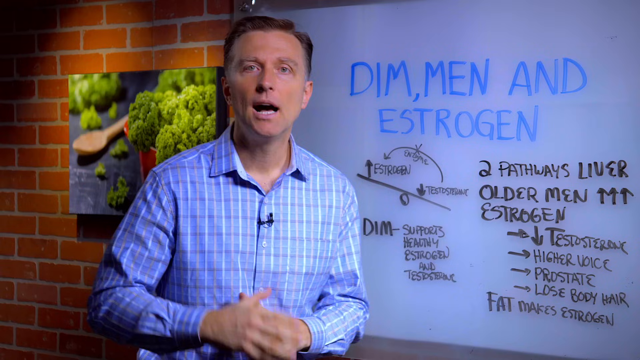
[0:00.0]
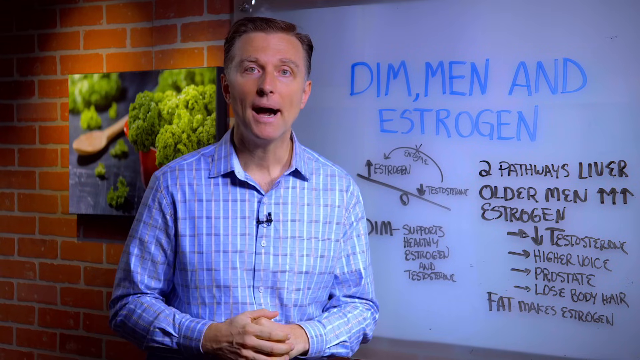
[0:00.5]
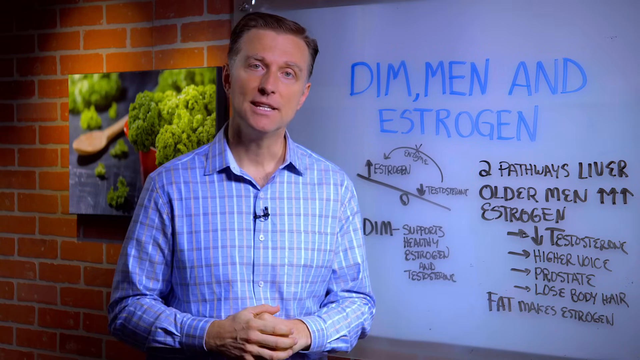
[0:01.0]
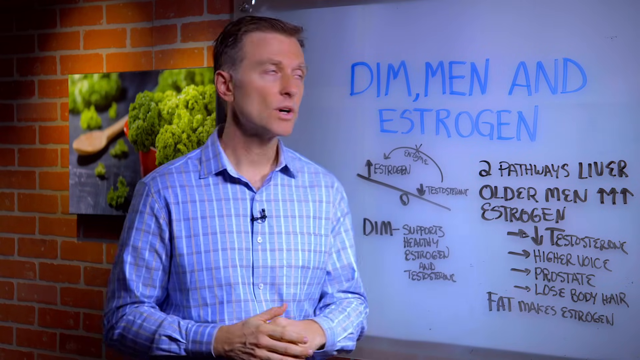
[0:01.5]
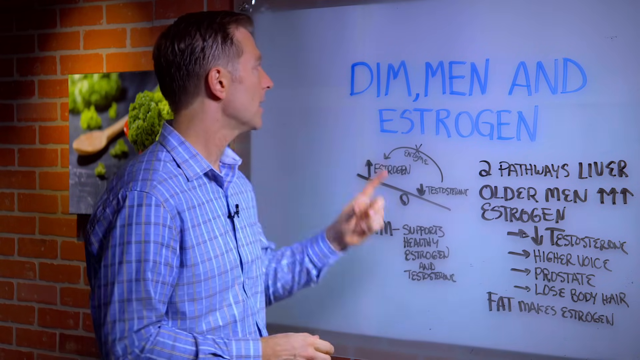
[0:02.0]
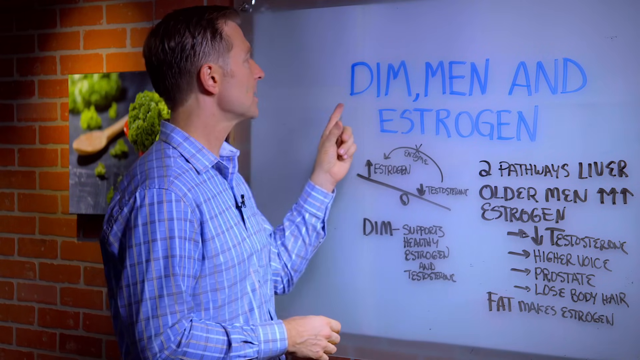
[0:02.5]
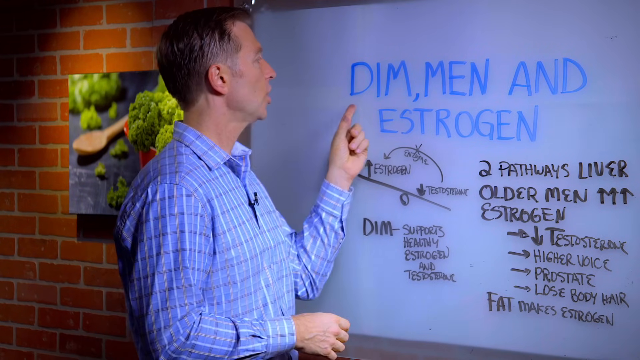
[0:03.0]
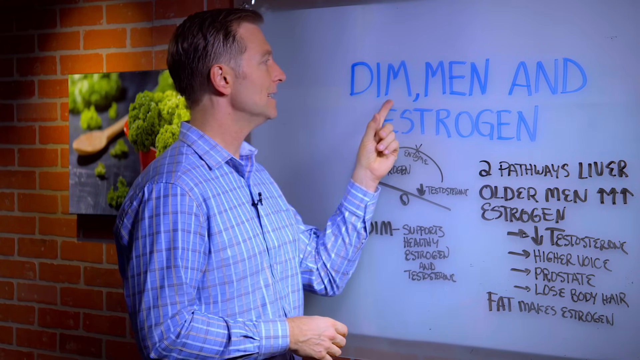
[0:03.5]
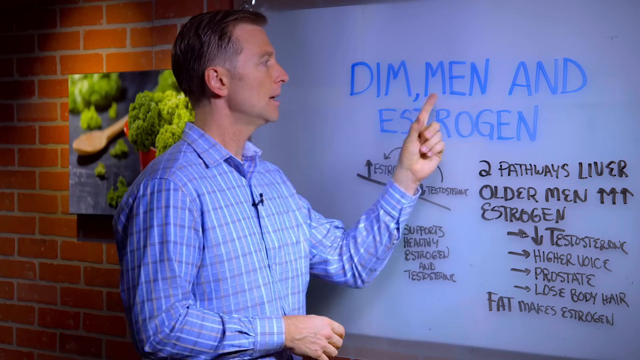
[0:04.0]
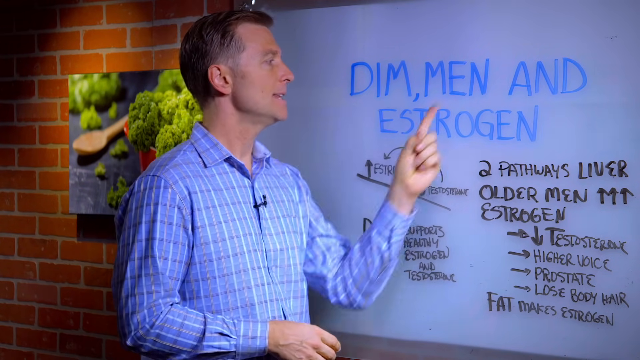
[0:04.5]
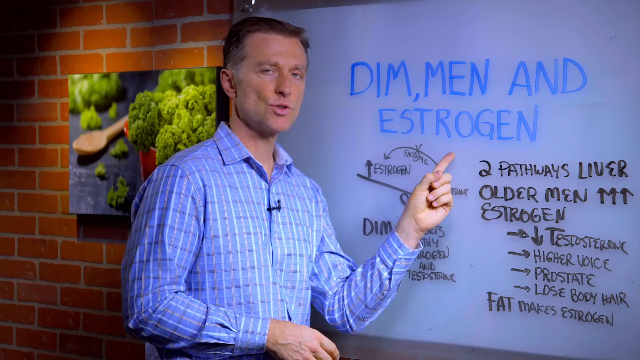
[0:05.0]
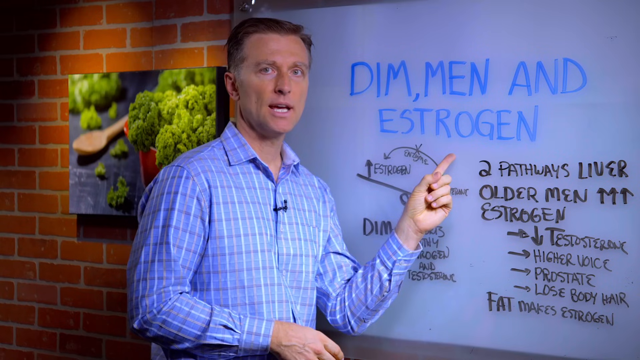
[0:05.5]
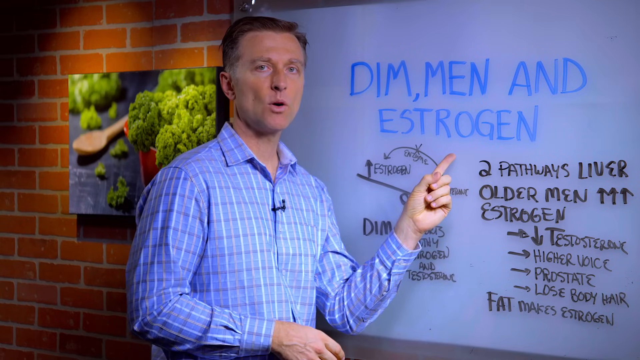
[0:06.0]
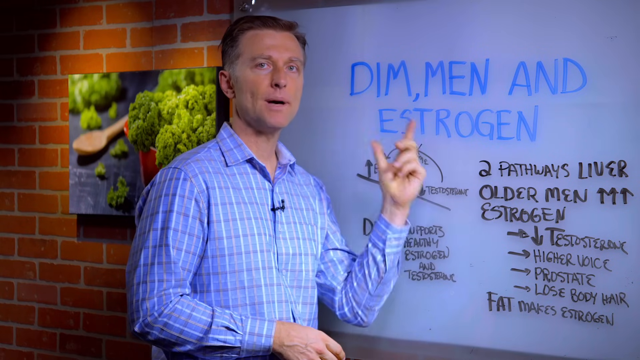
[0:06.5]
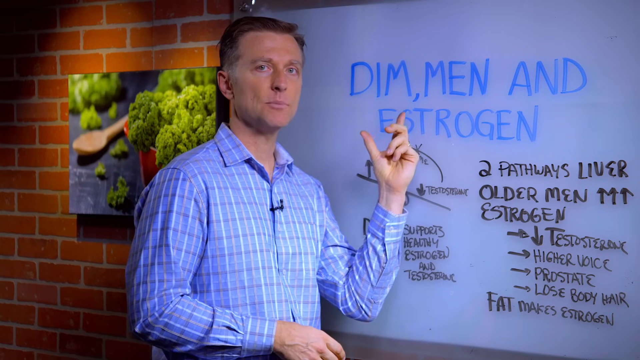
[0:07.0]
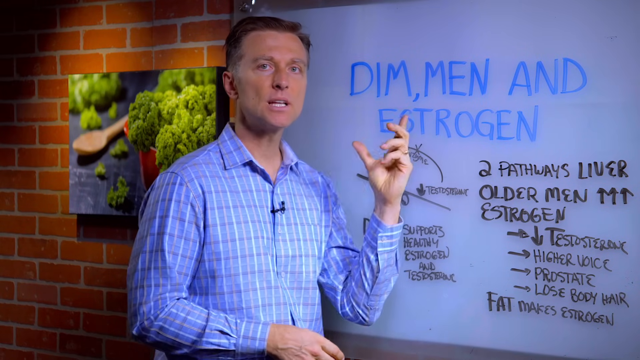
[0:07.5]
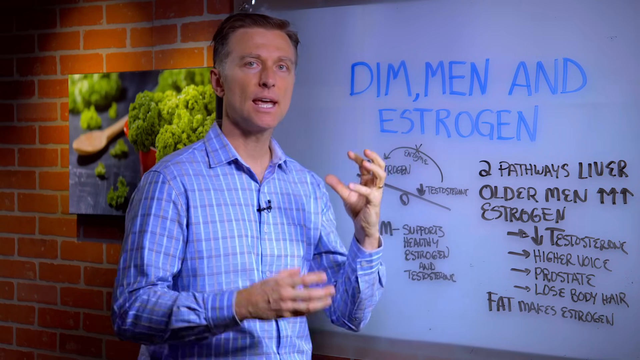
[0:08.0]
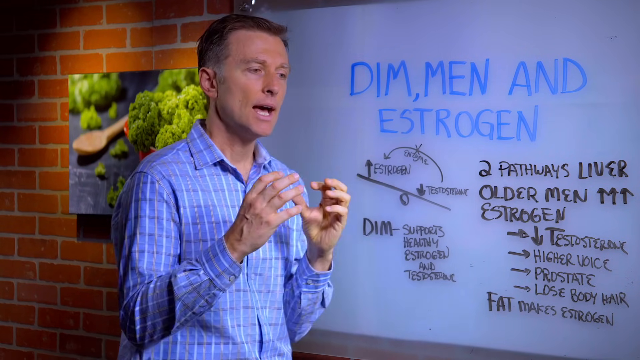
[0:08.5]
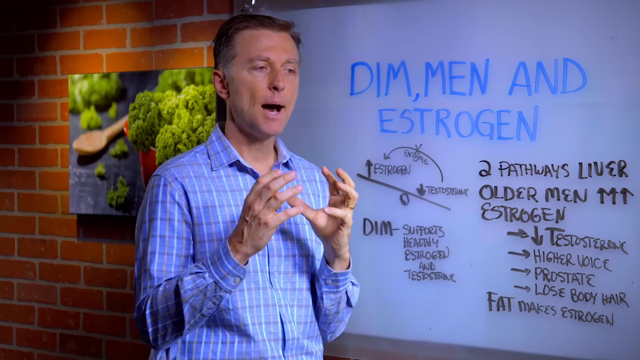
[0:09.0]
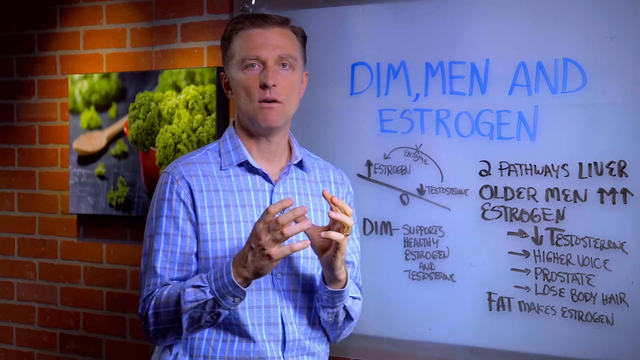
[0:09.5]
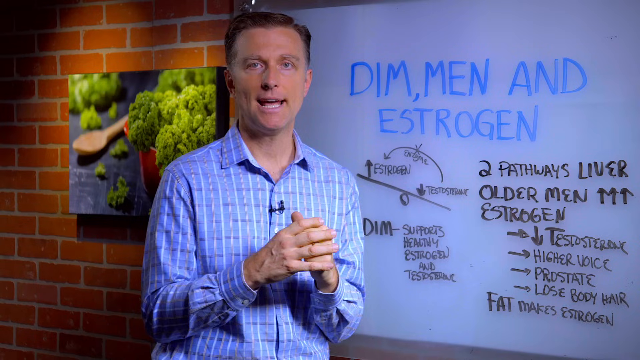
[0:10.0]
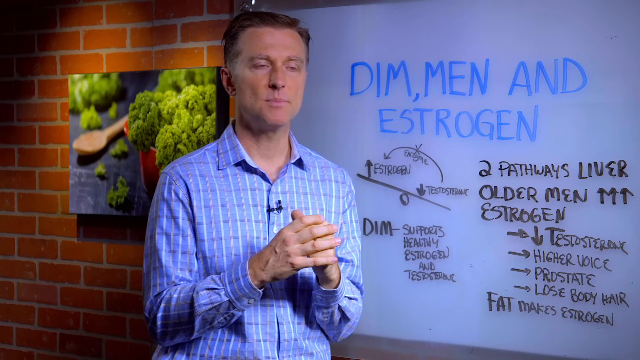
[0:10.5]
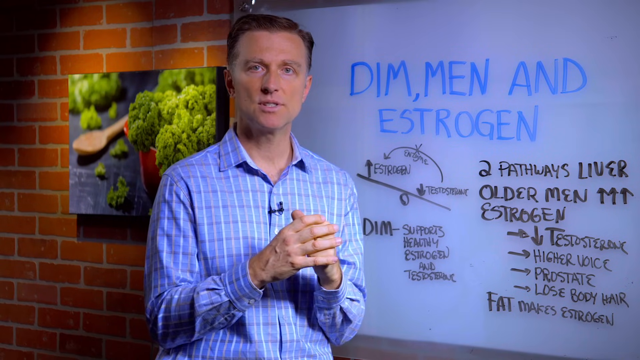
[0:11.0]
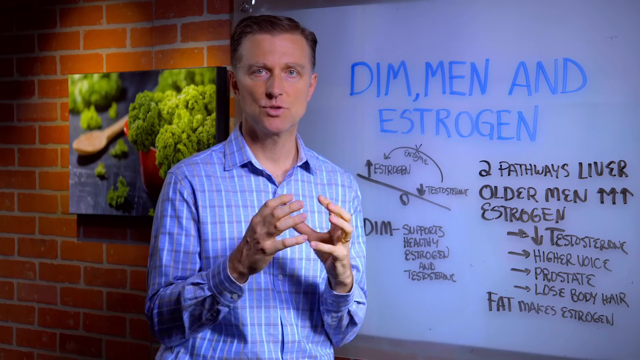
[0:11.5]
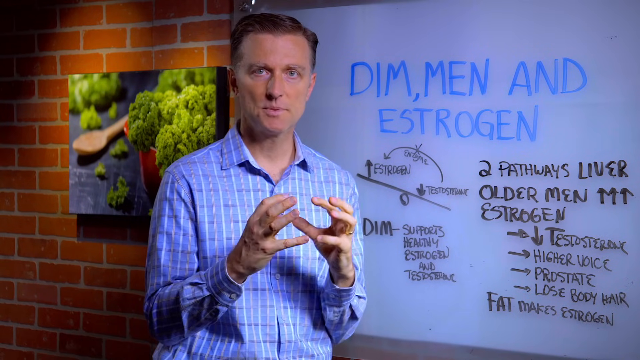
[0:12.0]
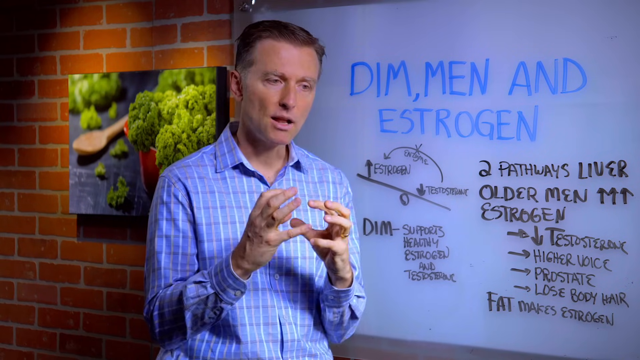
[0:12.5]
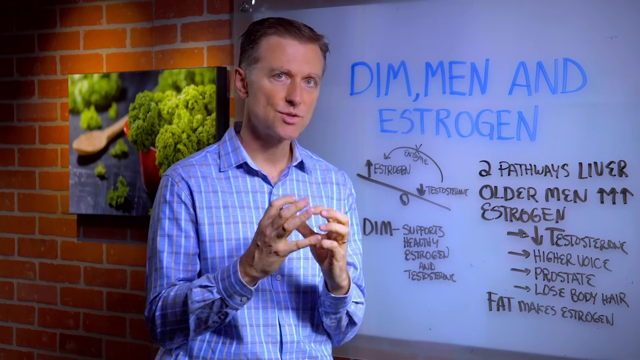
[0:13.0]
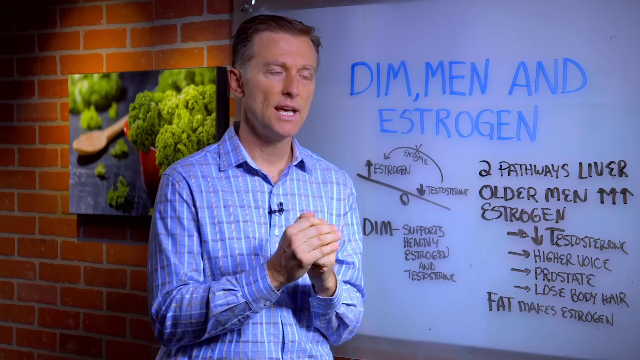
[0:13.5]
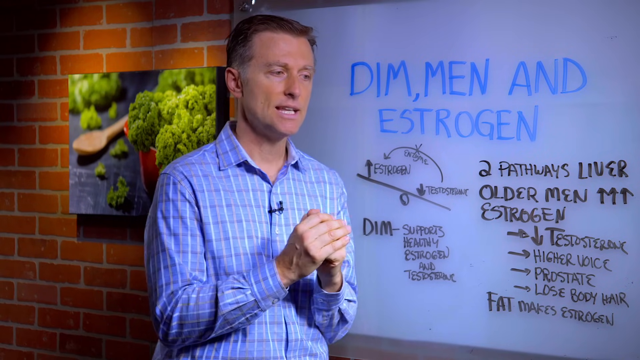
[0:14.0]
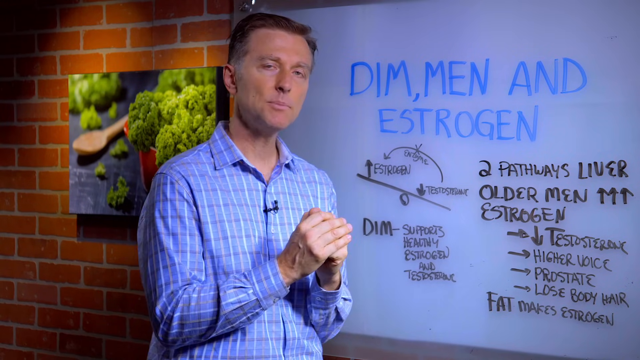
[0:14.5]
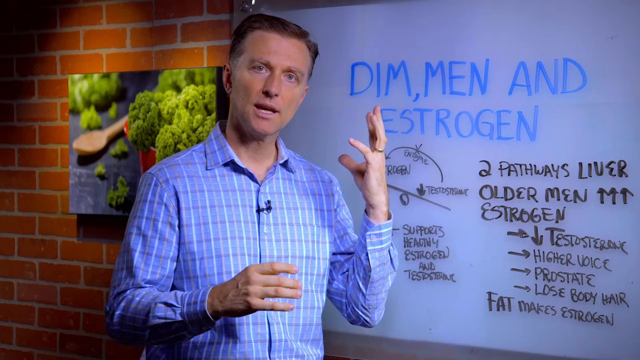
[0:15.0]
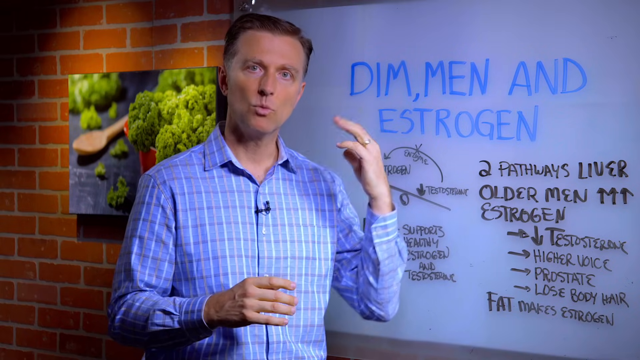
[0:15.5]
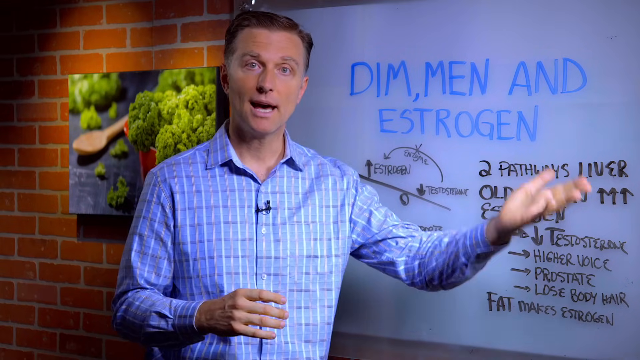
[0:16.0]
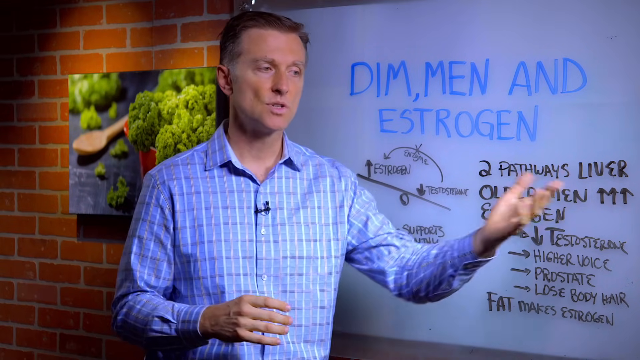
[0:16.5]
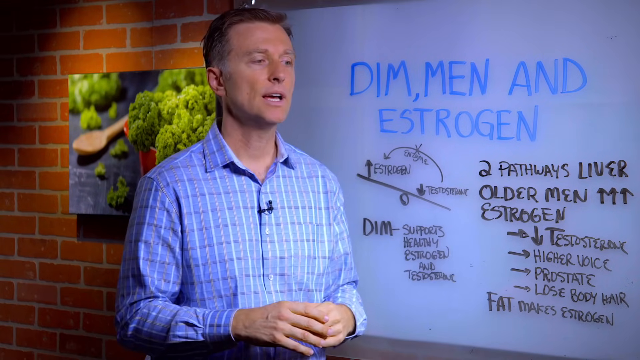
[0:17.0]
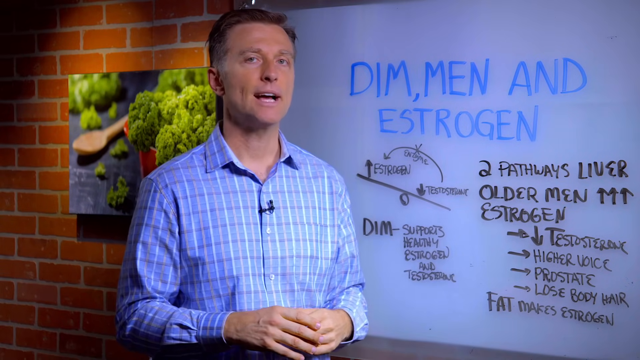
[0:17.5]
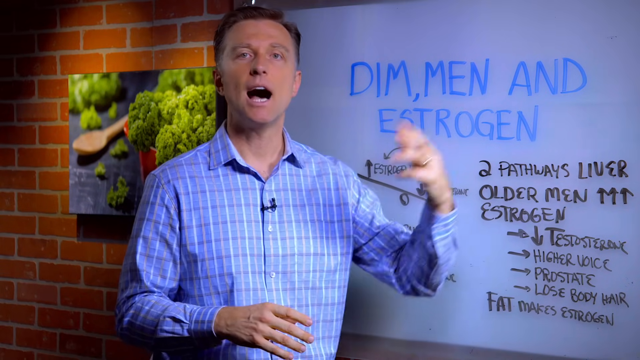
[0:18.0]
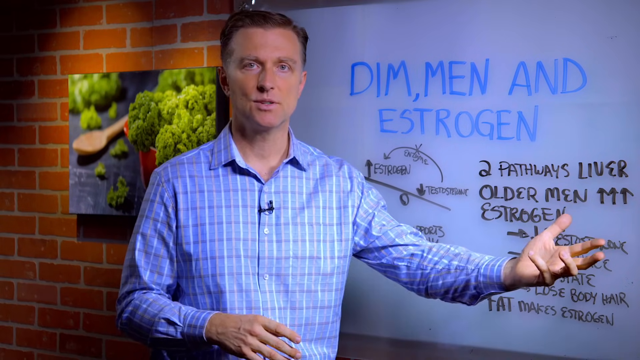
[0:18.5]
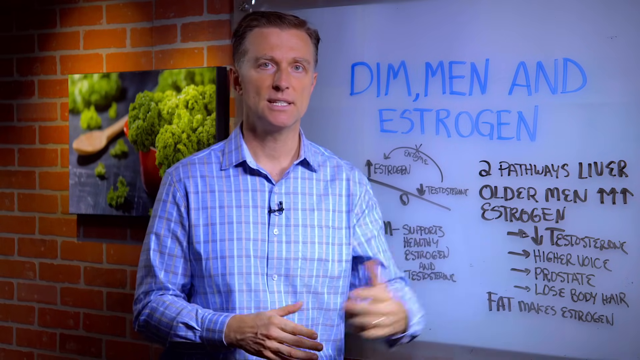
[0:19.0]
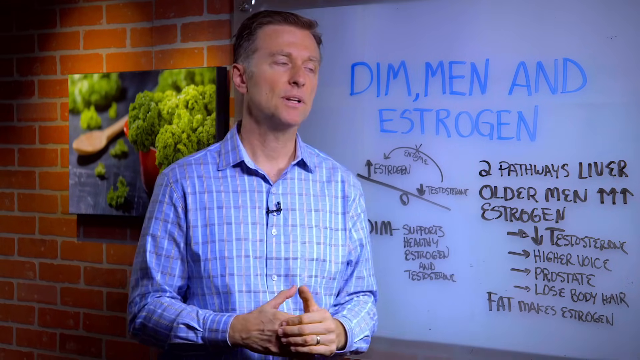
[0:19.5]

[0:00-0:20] A man wearing a blue plaited shirt, with a small black microphone hooked to his shirt, talks directly into the camera. Behind him is a whiteboard with various information written on it, and in the background there is a brick wall, a picture of something green, and a wooden spoon. At the top of the board, in blue writing, it says "DIM, MEN, and ESTROGEN." The man seems to be talking about what is on the board, and from time to time he talks with his hands. Additional things are written on the board in black, and there appears to be a drawing of some sort of scale, with "Estrogen" on one side and "Testosterone" on the other.